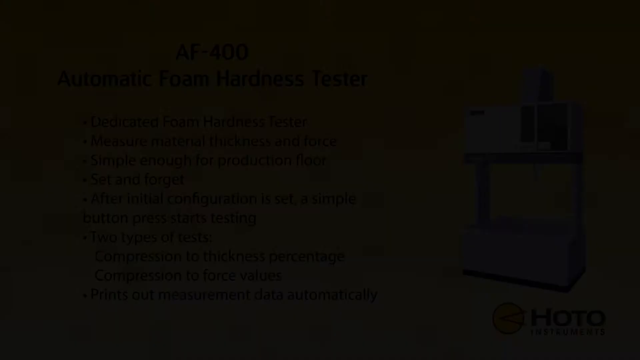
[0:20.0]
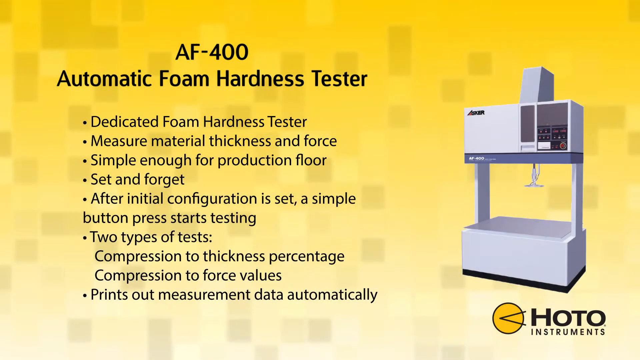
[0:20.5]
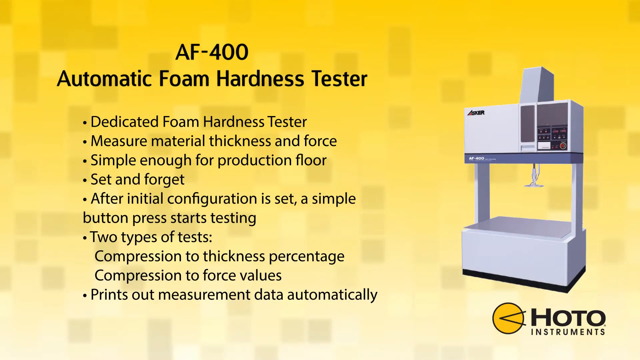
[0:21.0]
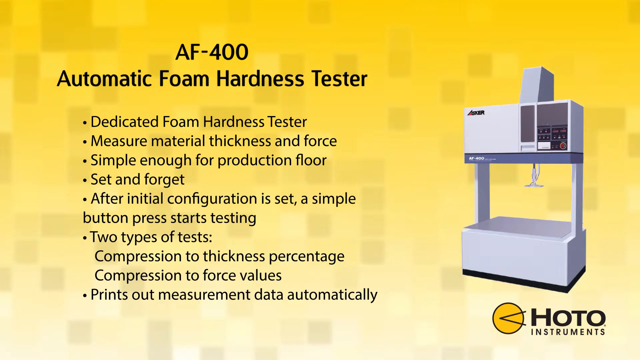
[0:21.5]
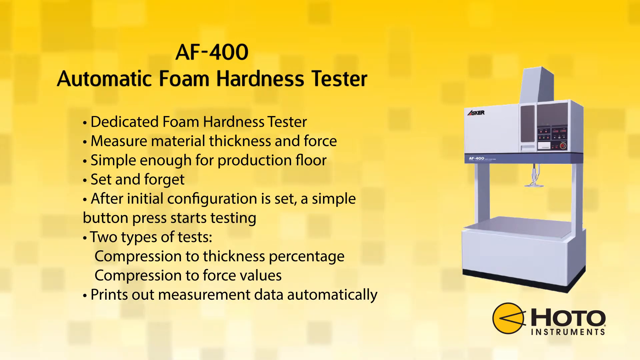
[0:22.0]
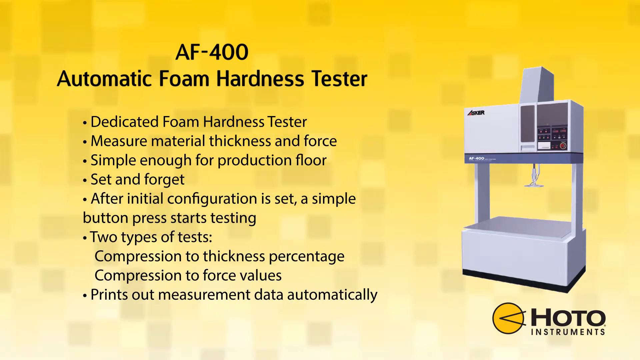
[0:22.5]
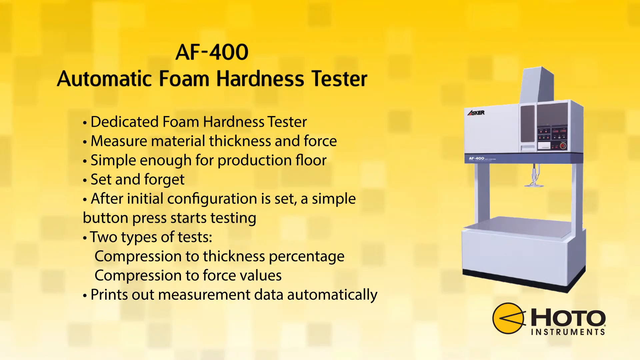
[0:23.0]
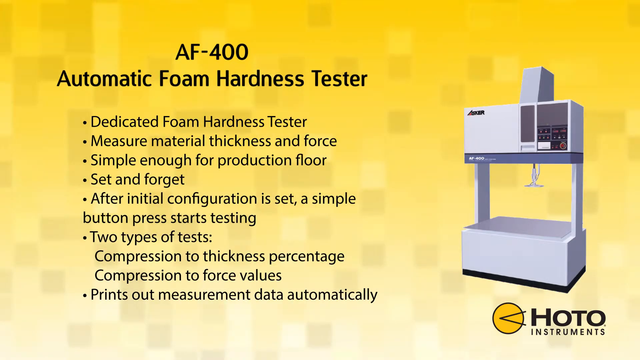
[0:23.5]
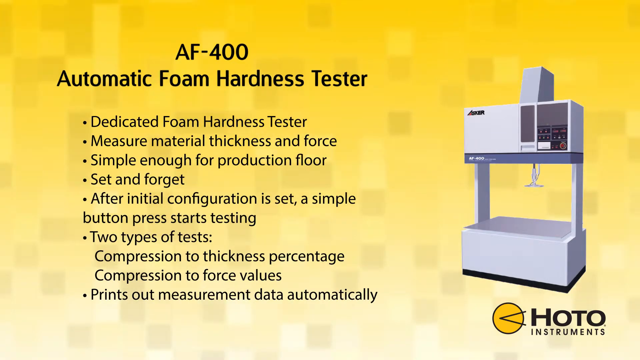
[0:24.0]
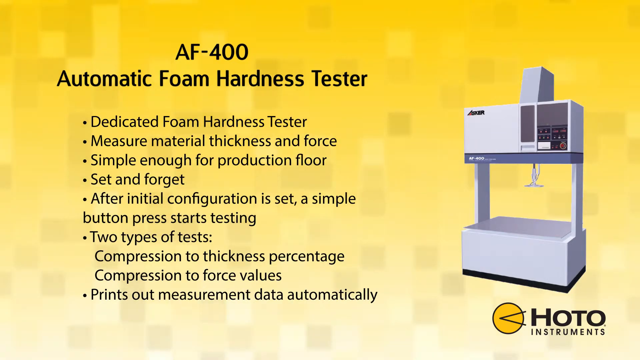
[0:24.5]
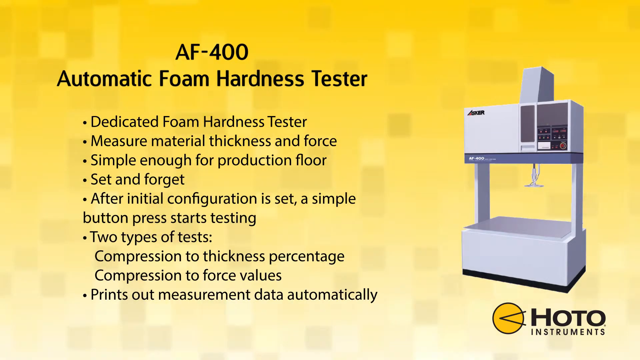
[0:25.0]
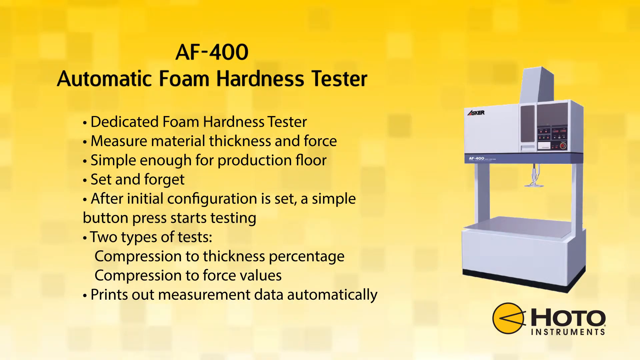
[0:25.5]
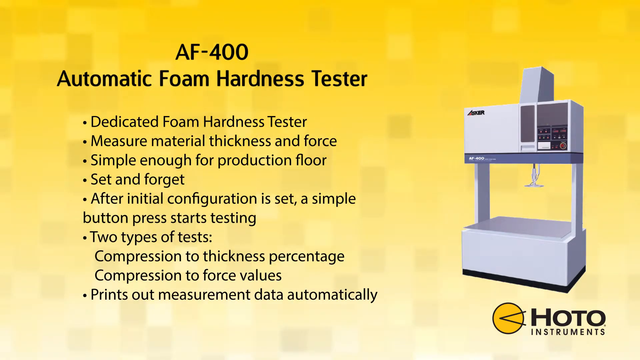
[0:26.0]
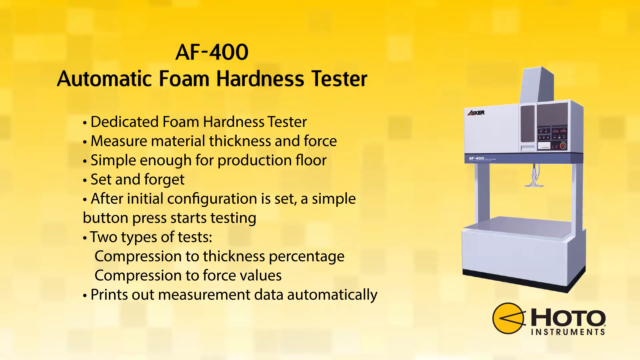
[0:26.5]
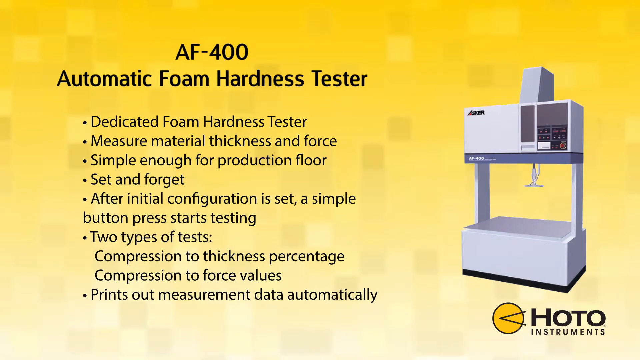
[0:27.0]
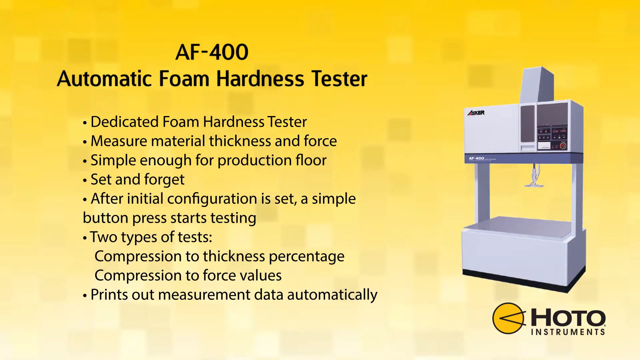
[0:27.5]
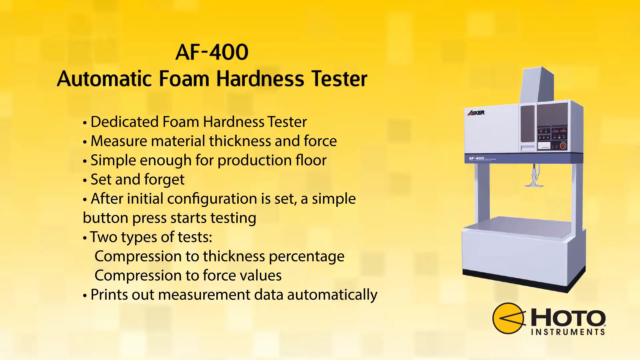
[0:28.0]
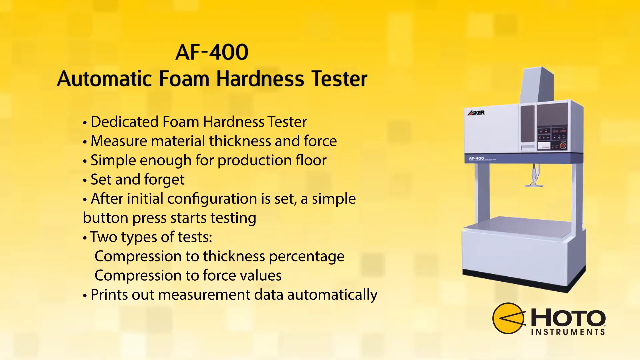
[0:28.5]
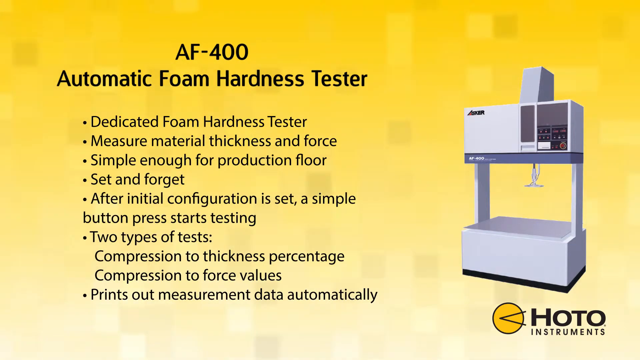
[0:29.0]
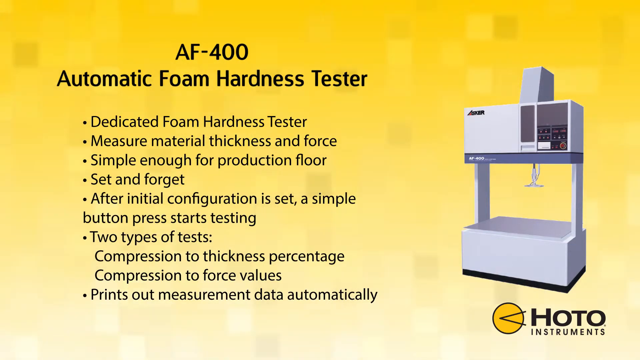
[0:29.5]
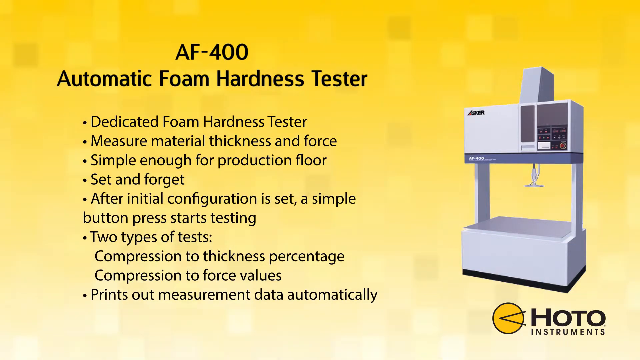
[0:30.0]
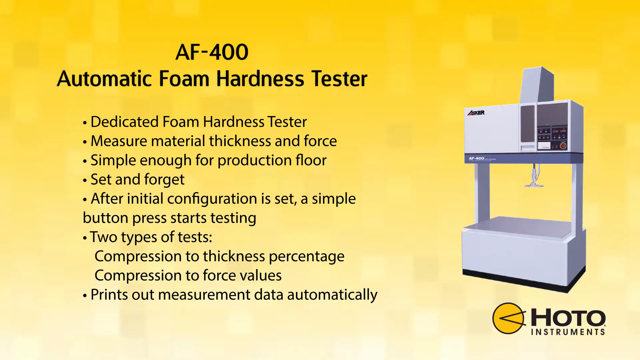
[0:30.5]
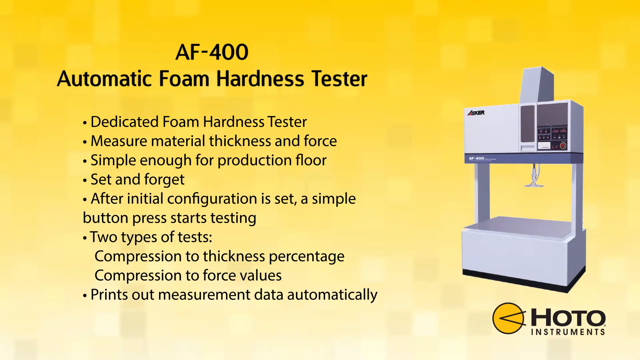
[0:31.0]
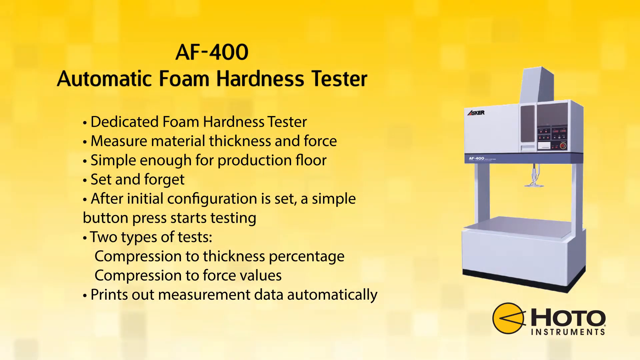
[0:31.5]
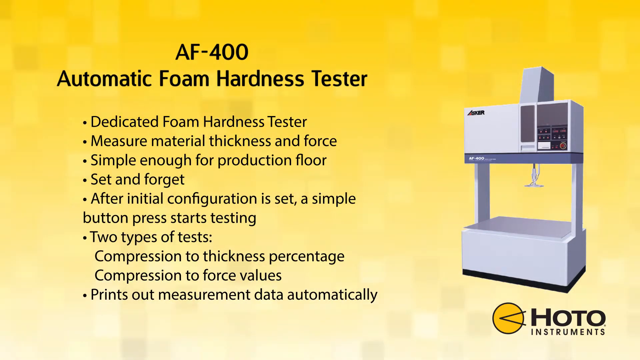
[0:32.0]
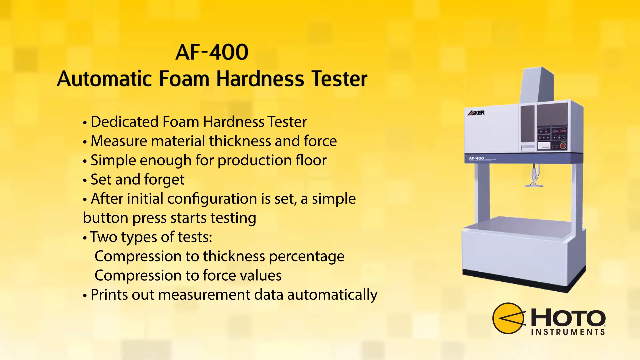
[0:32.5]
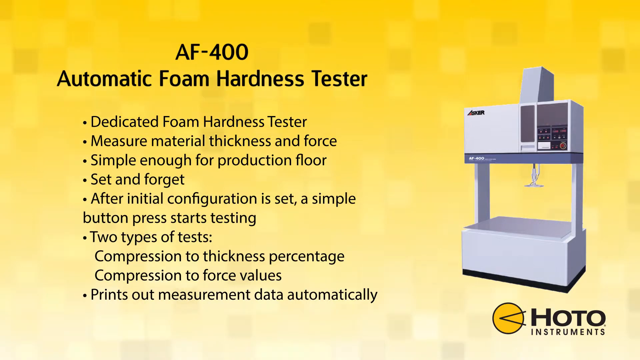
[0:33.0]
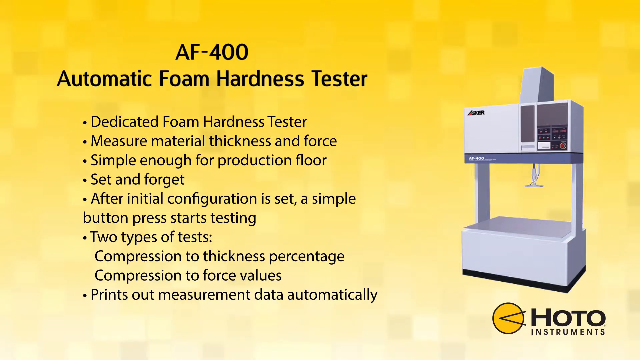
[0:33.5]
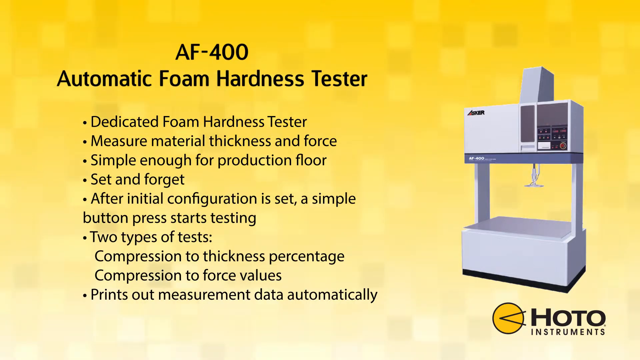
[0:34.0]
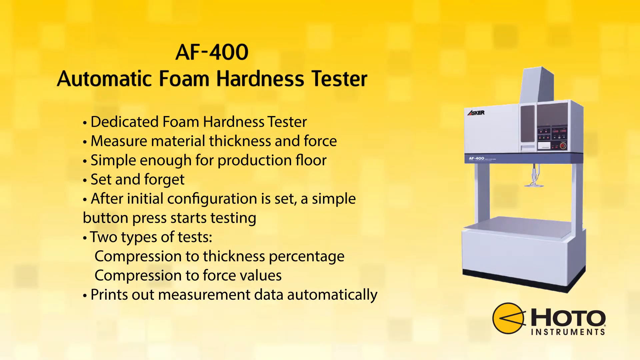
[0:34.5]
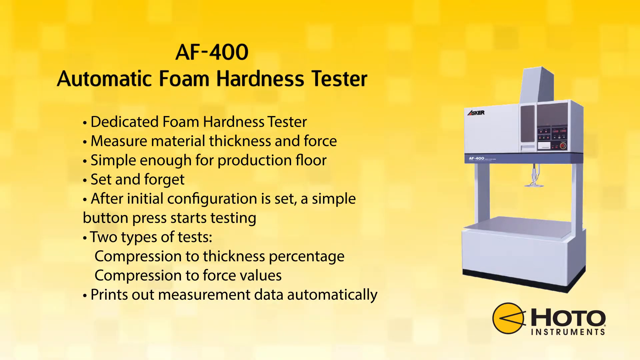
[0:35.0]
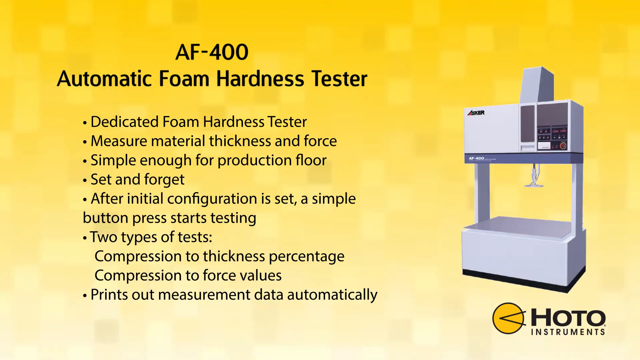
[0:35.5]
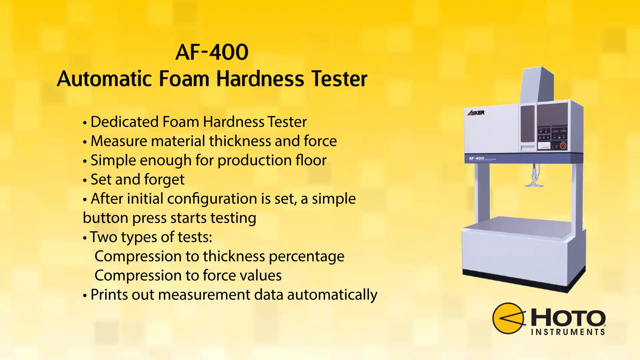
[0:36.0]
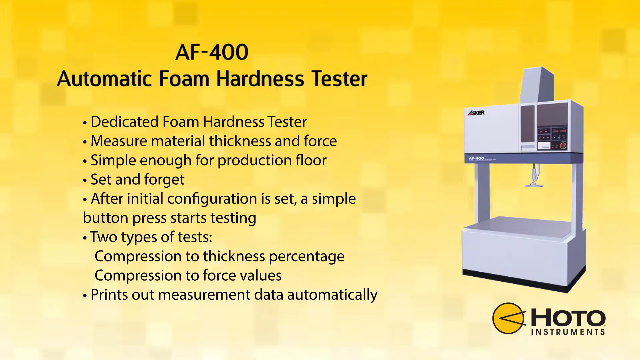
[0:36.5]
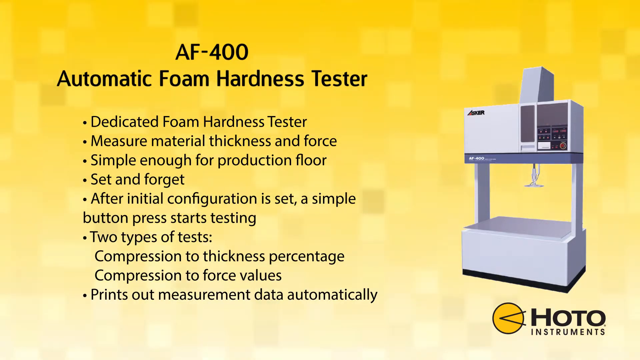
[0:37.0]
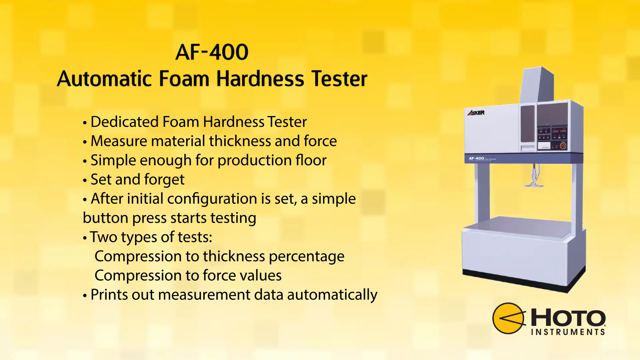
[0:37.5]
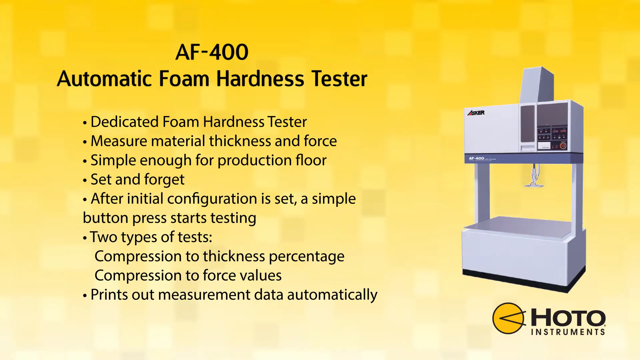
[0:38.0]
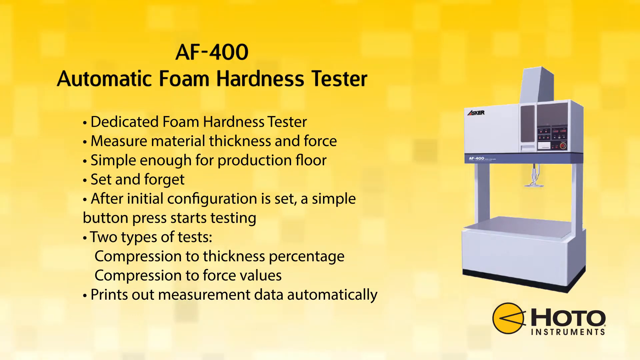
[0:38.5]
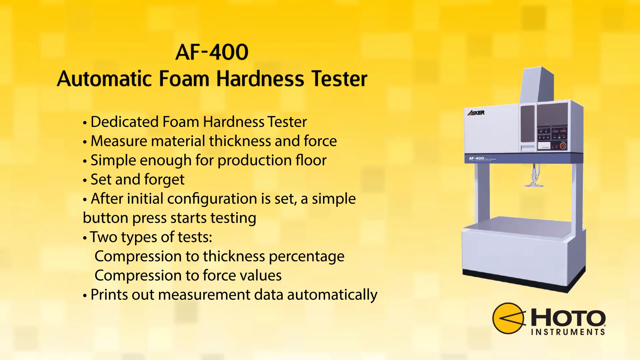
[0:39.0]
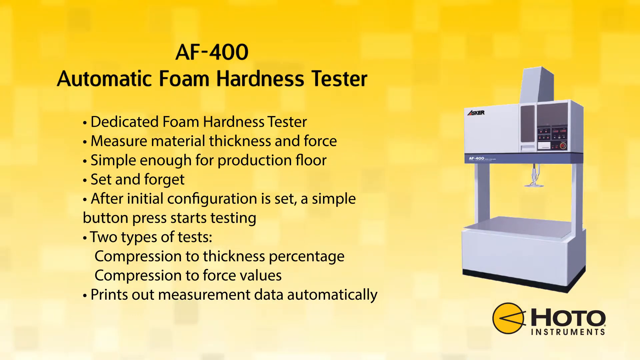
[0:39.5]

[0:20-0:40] The same slide stays on screen, showing a picture of an AF 400 automatic foam hardness tester. The background is pixelated, with blinking, kind of rectangular pixels going down the screen. Text on the slide reads "dedicated foam hardness tester", "measure material thickness", "simple enough for production floor", "set and forget", "after initial configuration is set a simple button press starts testing", followed by compression types of tests: "compression to thickness percentage", "compression to force values" and "prints out measurement and data". There is a picture of the machine, which looks pretty simple. The bottom of the slide is dark.